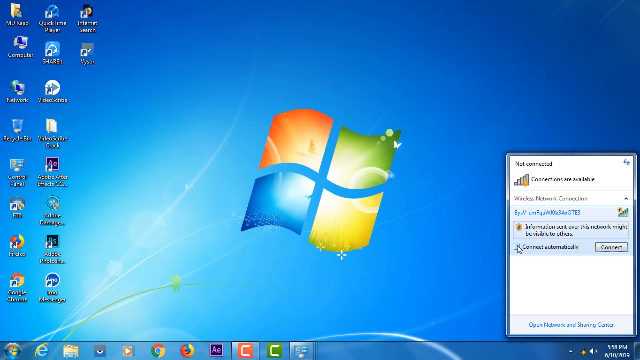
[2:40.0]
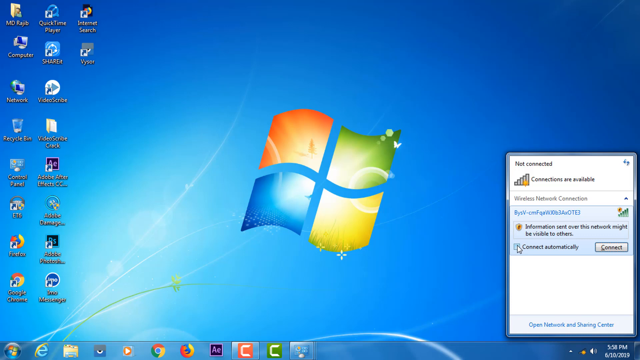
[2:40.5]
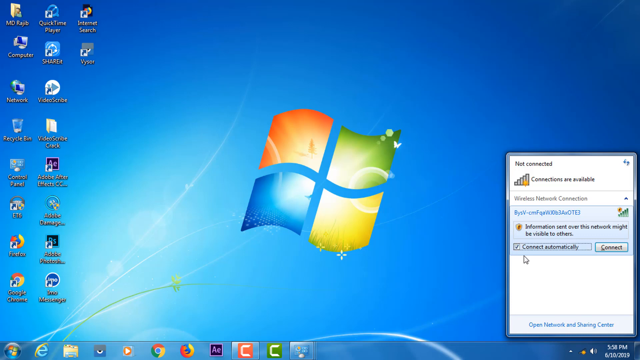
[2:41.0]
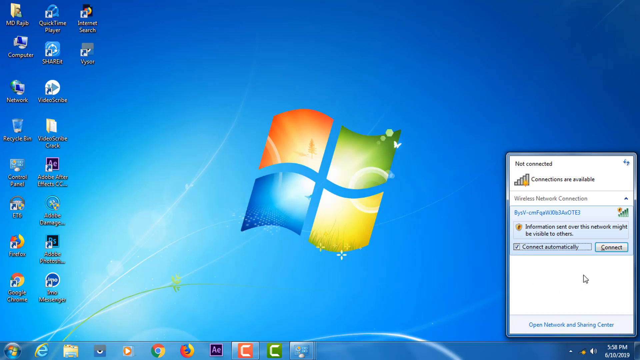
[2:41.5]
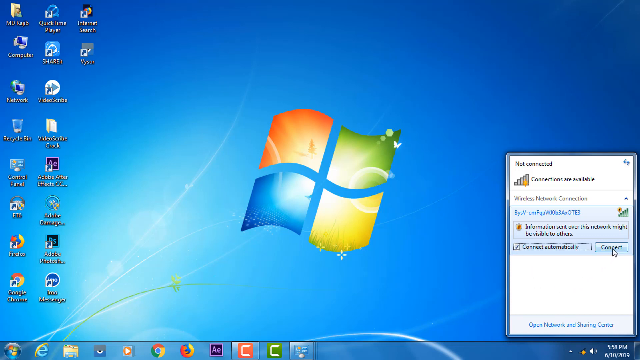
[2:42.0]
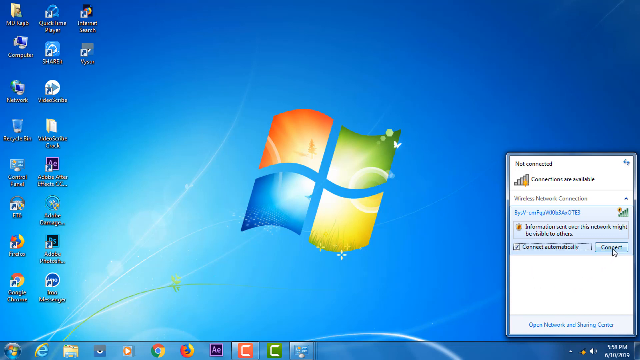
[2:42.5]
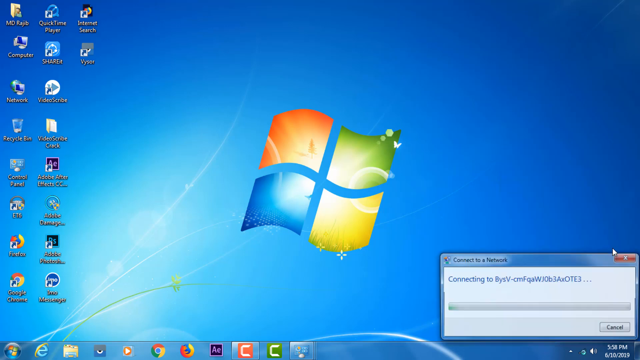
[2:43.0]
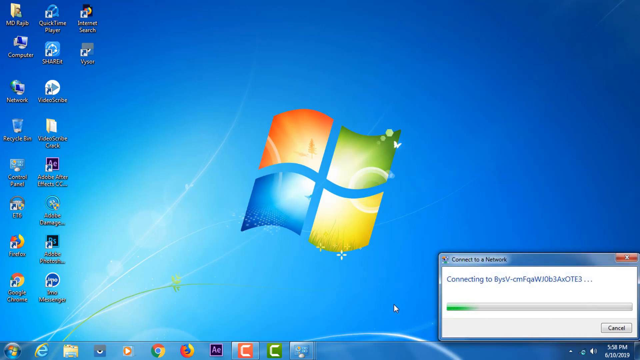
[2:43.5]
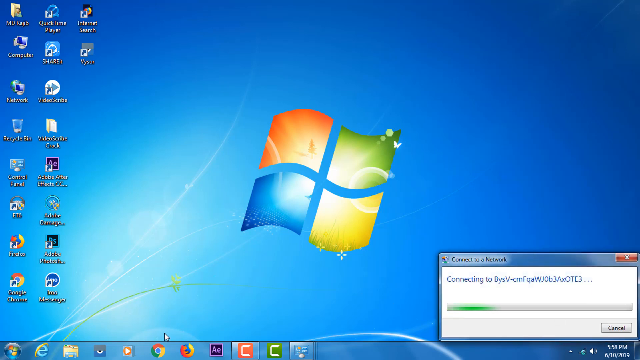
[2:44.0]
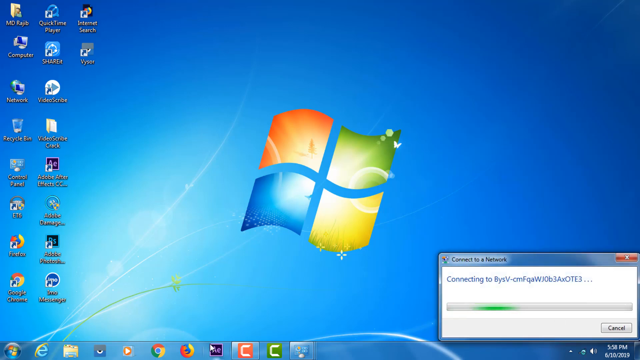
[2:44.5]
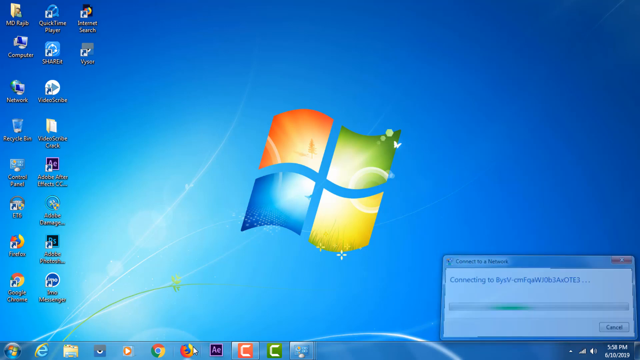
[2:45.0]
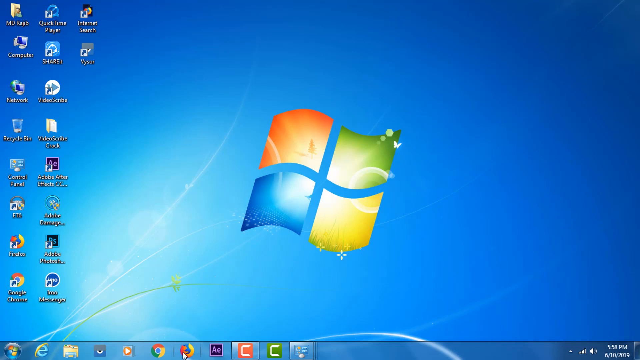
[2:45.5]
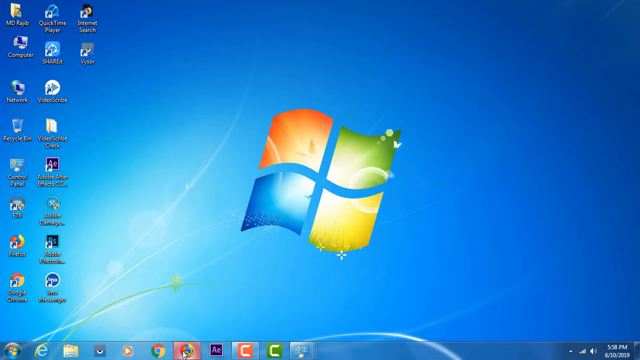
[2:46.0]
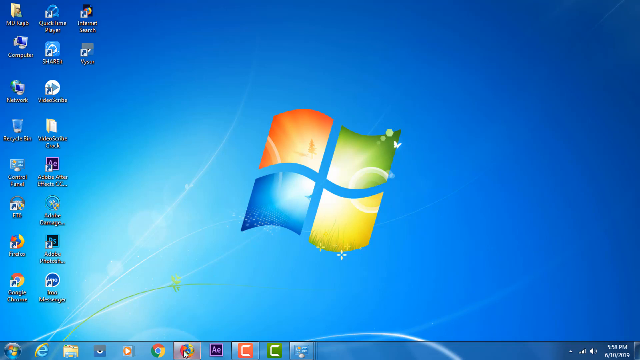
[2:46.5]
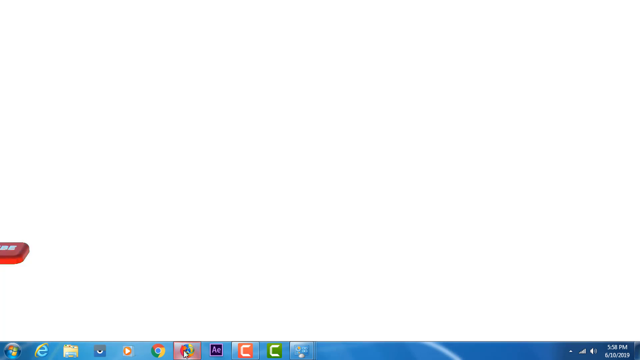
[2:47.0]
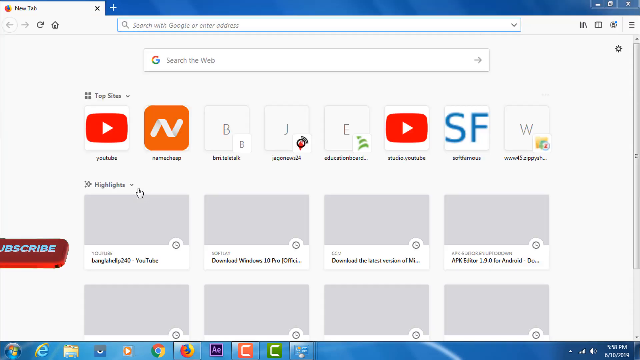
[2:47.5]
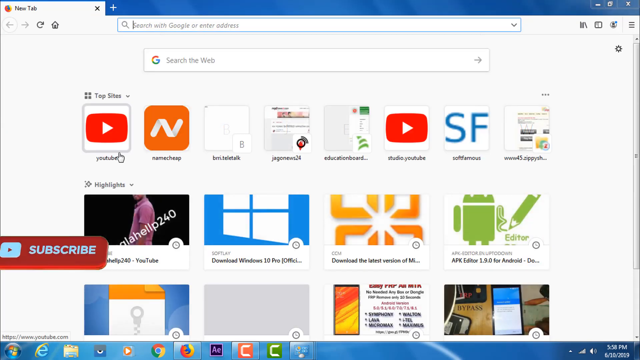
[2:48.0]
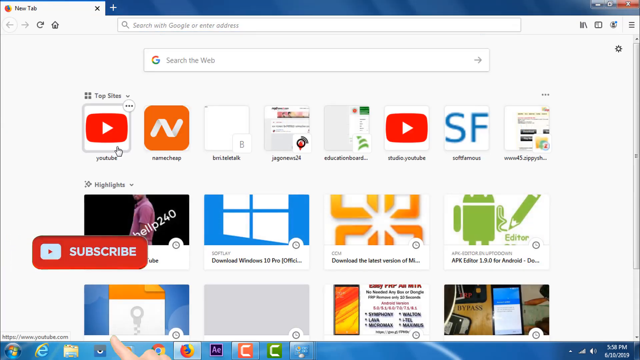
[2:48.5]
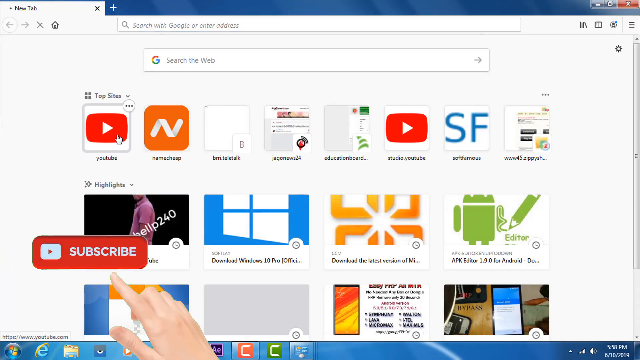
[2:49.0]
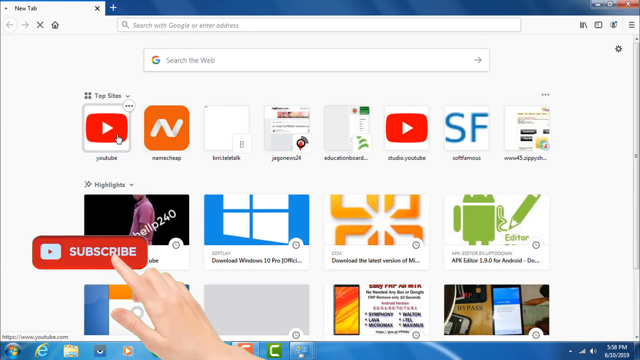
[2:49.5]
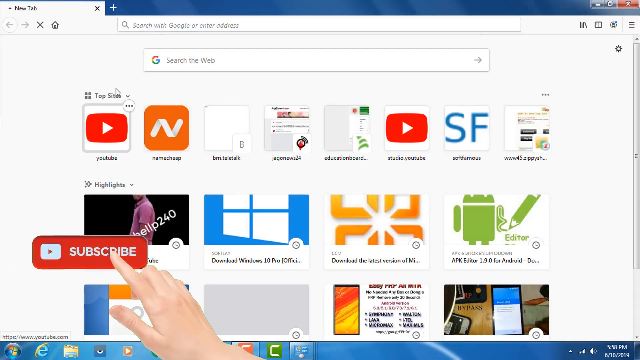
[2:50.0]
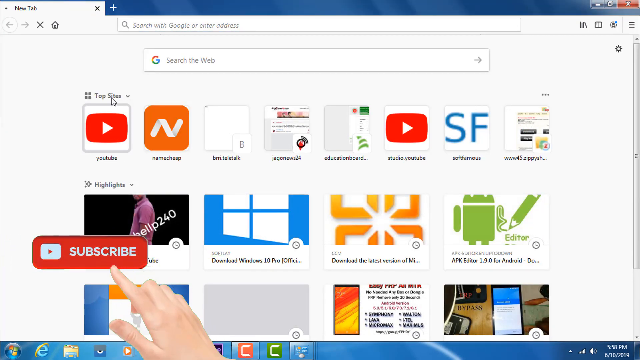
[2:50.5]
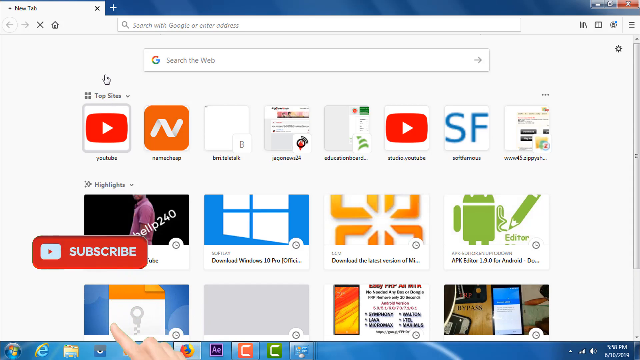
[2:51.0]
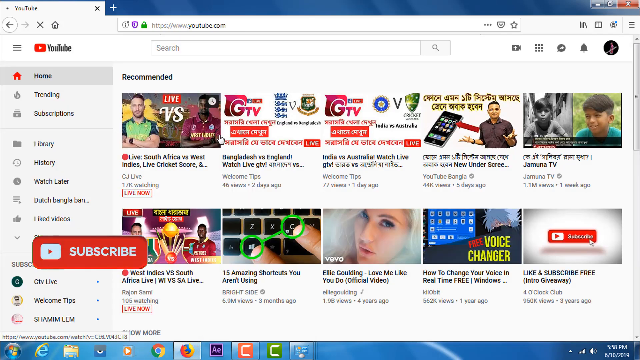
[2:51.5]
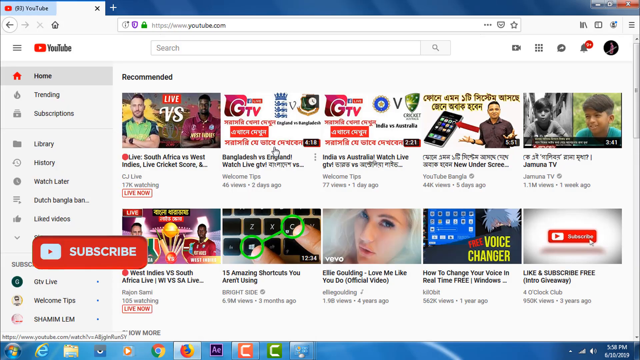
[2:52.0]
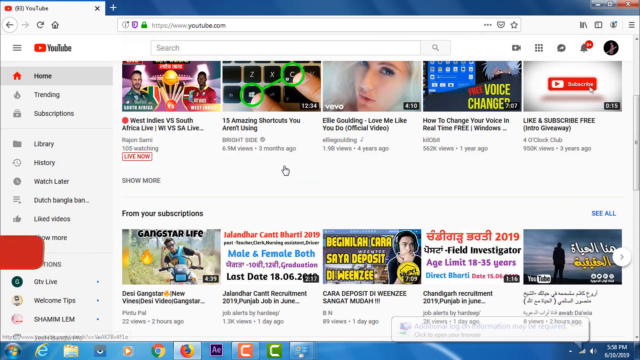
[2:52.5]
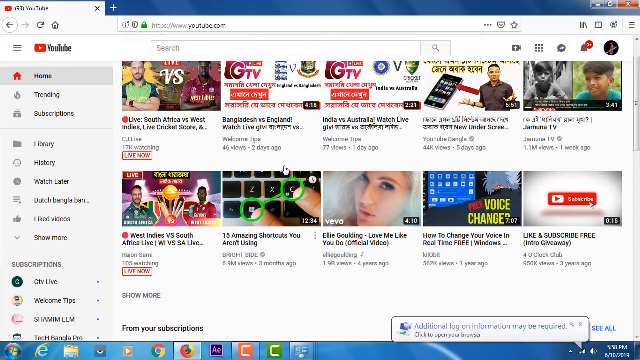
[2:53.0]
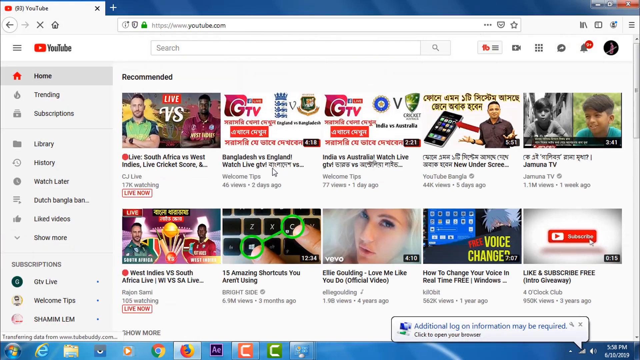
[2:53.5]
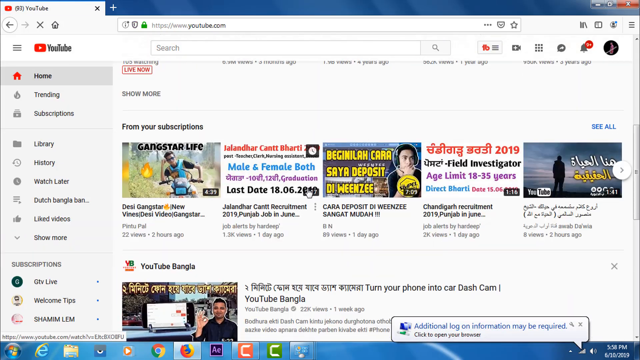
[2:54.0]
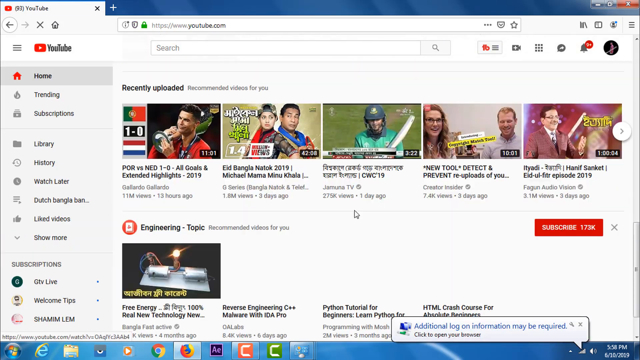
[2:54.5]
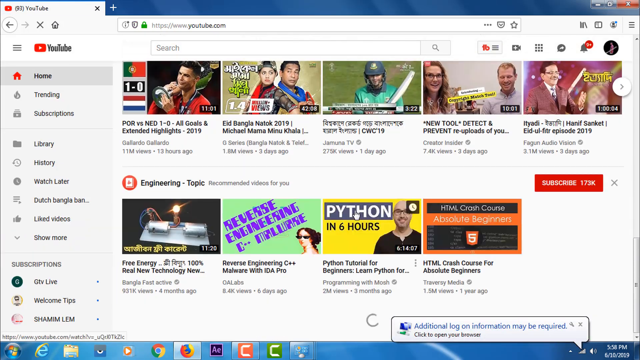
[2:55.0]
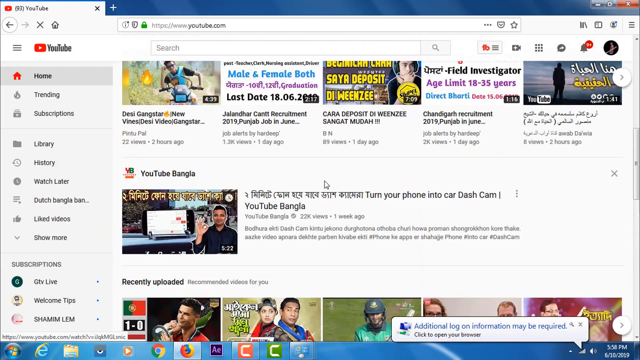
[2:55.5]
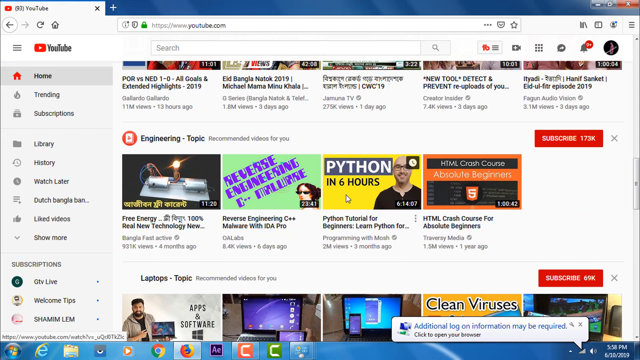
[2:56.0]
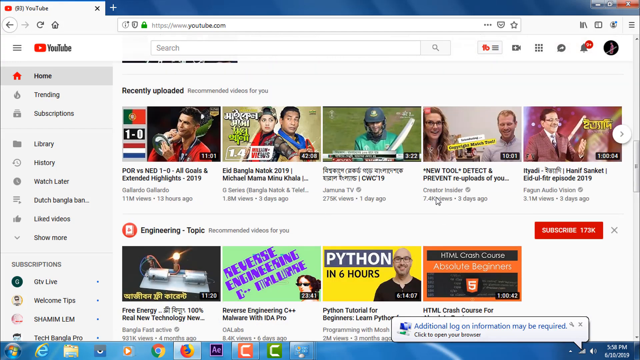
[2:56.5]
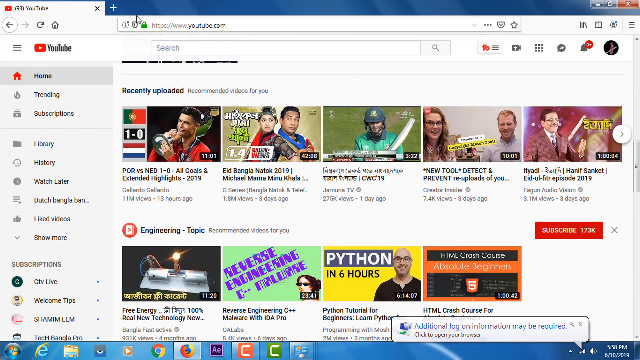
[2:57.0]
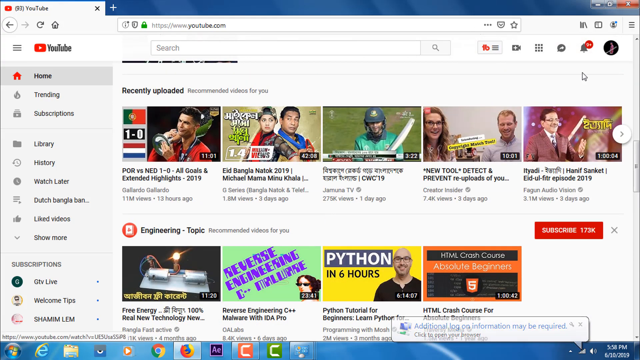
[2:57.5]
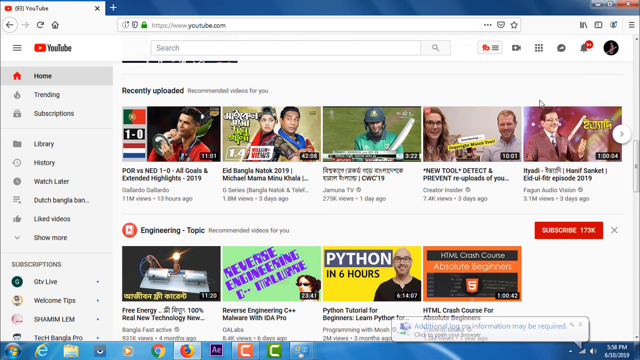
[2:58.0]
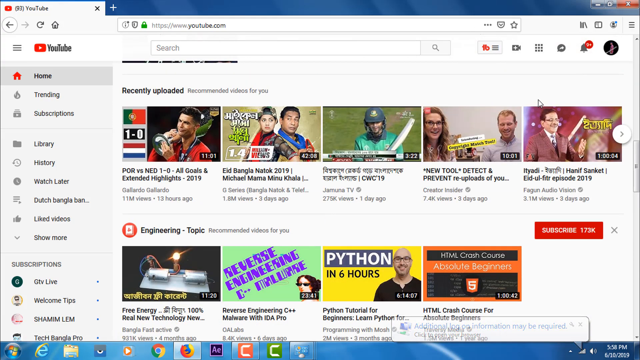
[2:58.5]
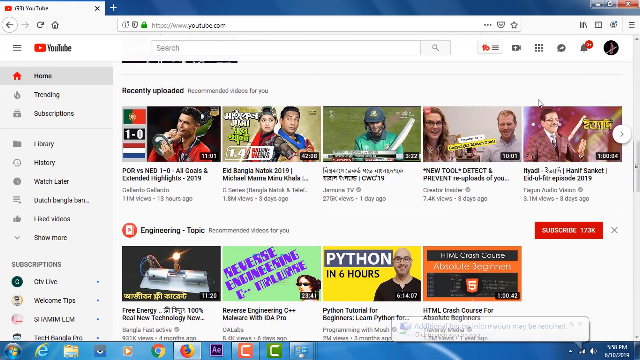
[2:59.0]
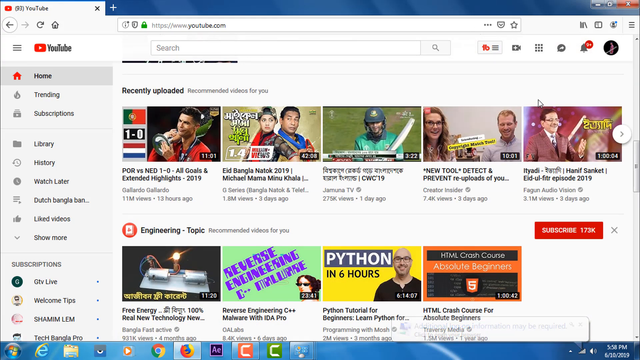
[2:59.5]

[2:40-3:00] The Windows screen has a bright blue background with the red, green, blue and yellow Windows logo in the middle and some clickable apps on the left side. In the bottom right, the network button is open with a white box that says "not connected" and "connections are available." The user has clicked the available router and hovers over the connect automatically option, checks it, and then clicks connect to the right of it. A new white box pops up saying "connect to a network," showing it connecting to the router with a grey bar along which green progress pulses as it loads. The box disappears as the connection succeeds. The user opens a browser tab to navigate to a website. Meanwhile, a red YouTube subscribe button with white text appears at the bottom left of the screen, and a finger appears, touches the button and disappears downwards before the button moves off to the left and out of the screen. The user clicks on YouTube, which loads, and scrolls down to show video previews loading, showing a successful internet connection.